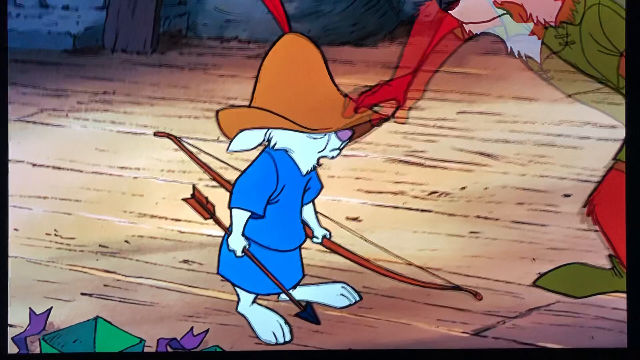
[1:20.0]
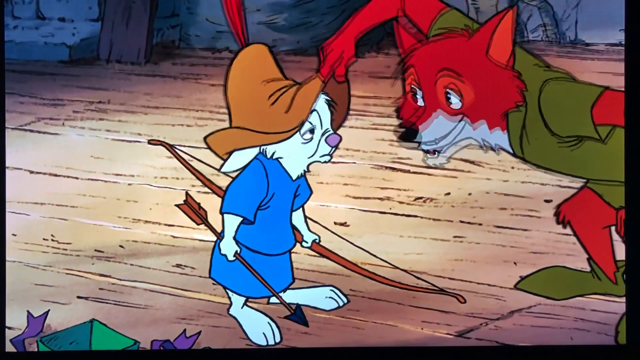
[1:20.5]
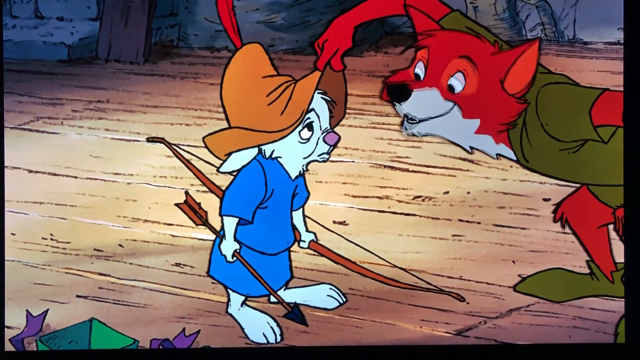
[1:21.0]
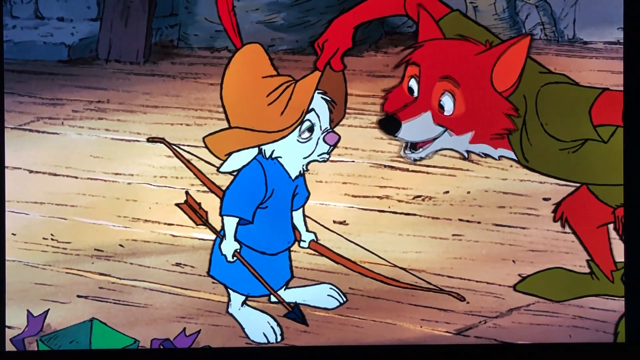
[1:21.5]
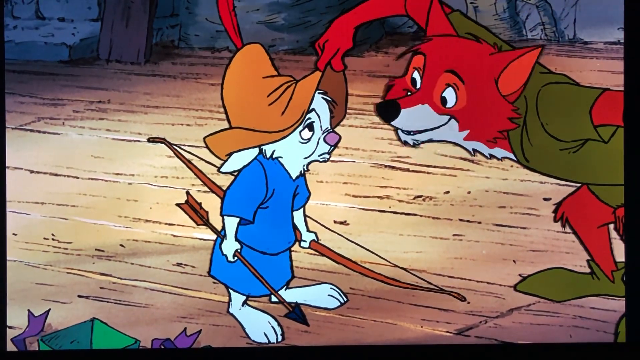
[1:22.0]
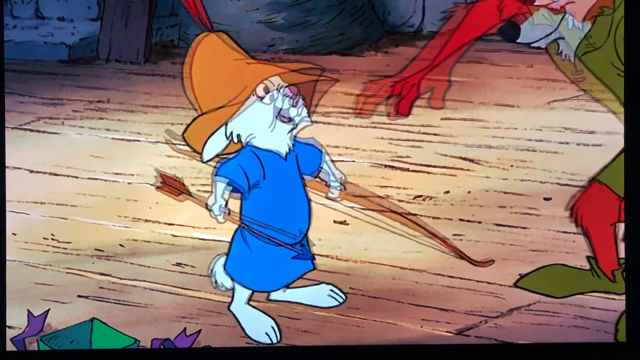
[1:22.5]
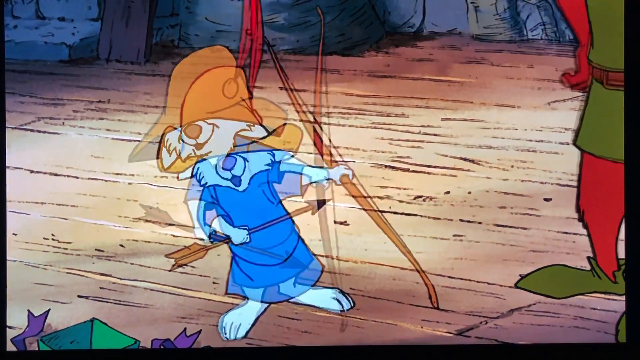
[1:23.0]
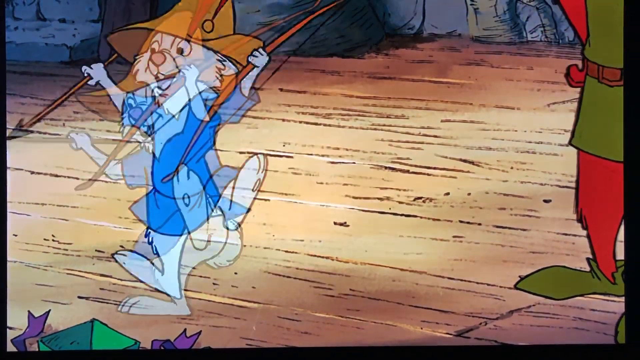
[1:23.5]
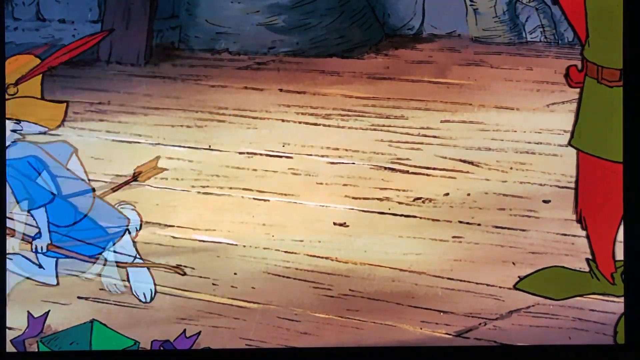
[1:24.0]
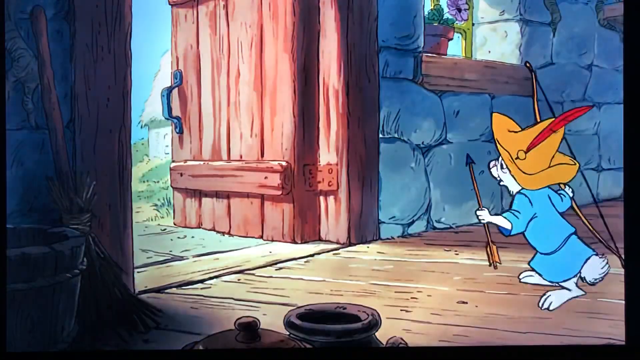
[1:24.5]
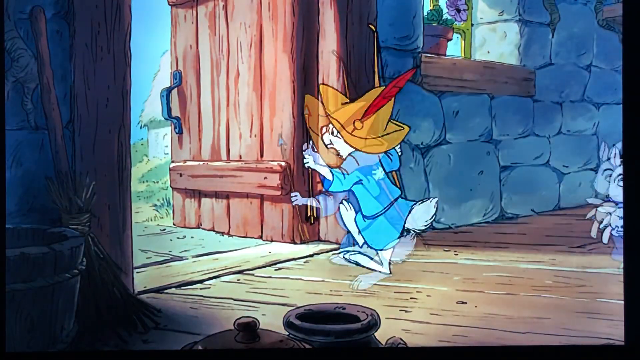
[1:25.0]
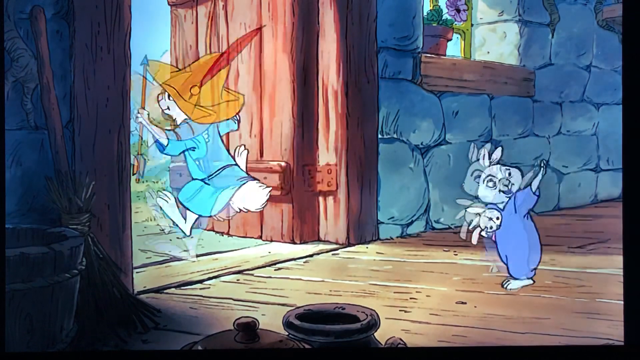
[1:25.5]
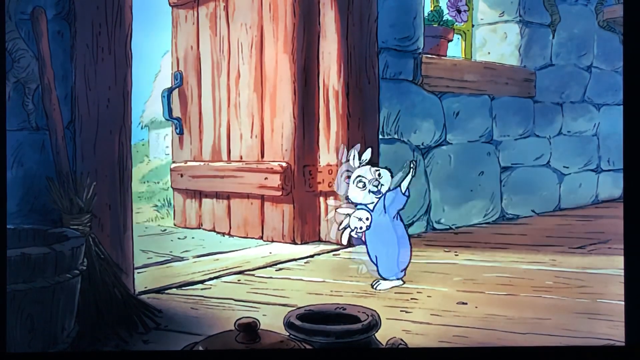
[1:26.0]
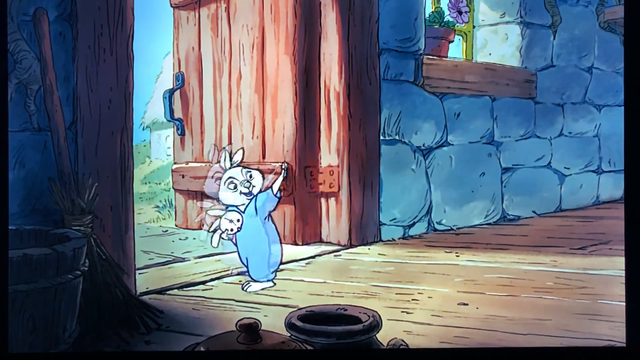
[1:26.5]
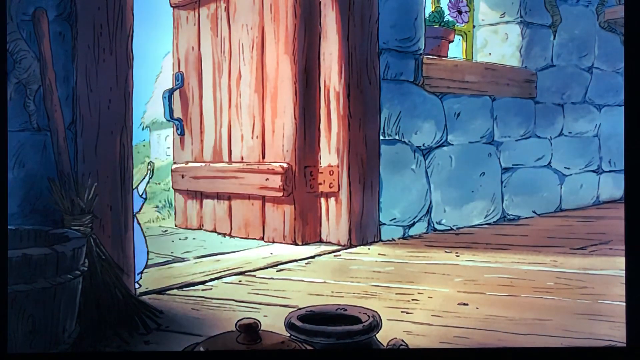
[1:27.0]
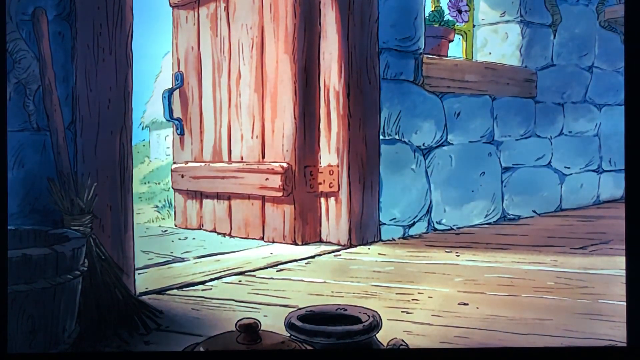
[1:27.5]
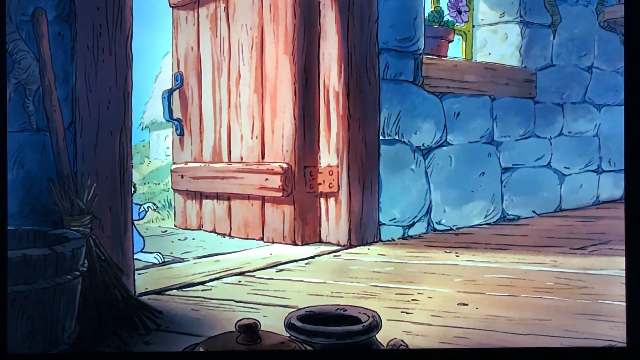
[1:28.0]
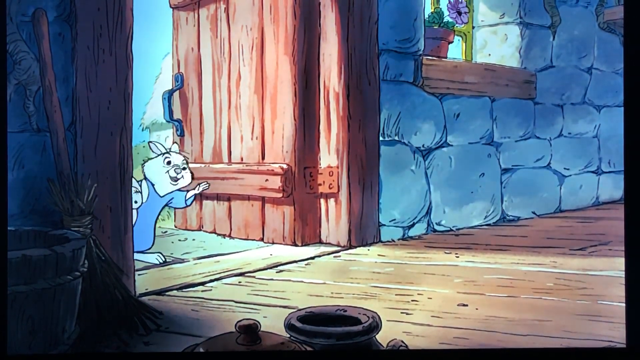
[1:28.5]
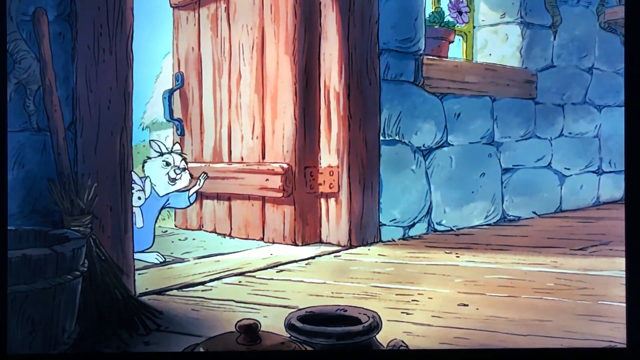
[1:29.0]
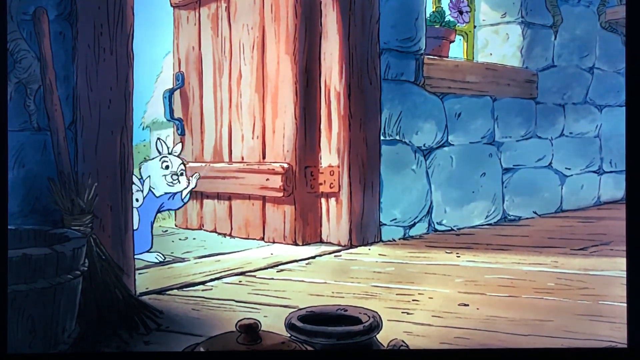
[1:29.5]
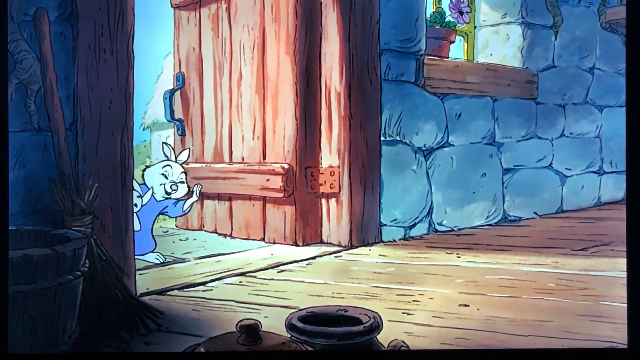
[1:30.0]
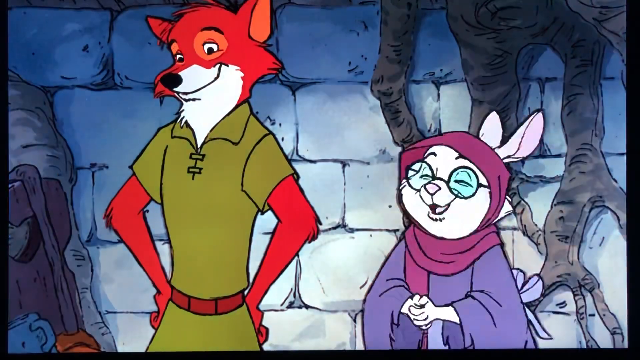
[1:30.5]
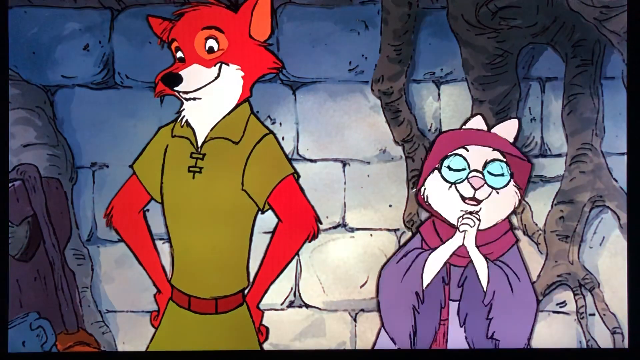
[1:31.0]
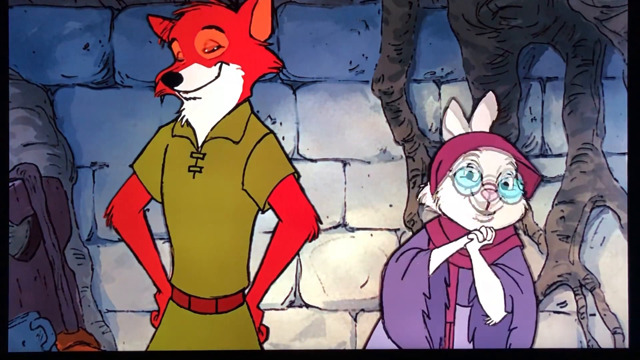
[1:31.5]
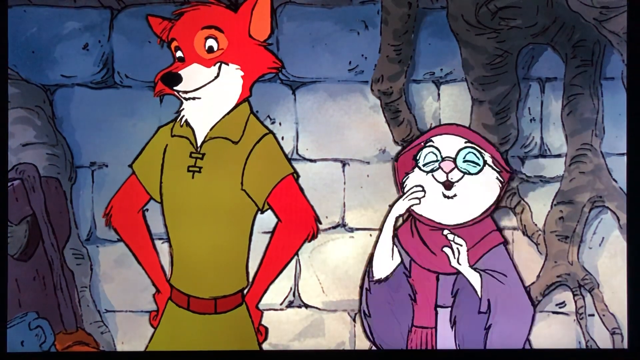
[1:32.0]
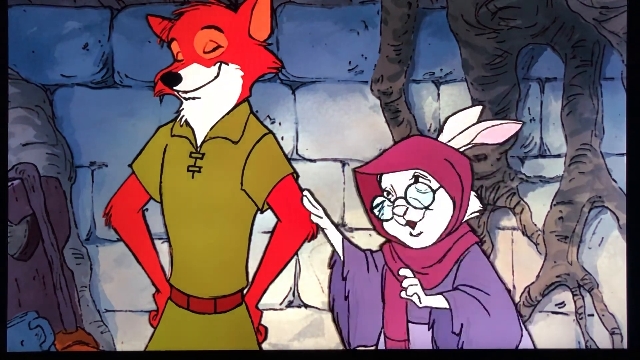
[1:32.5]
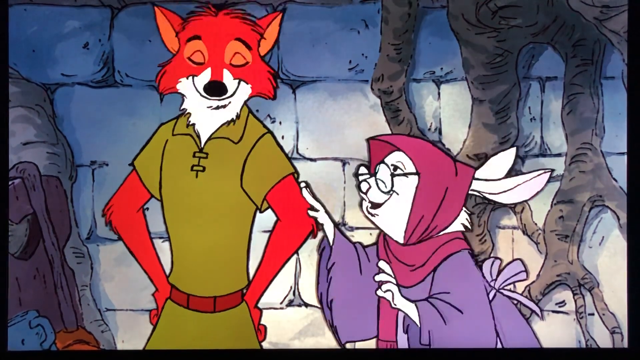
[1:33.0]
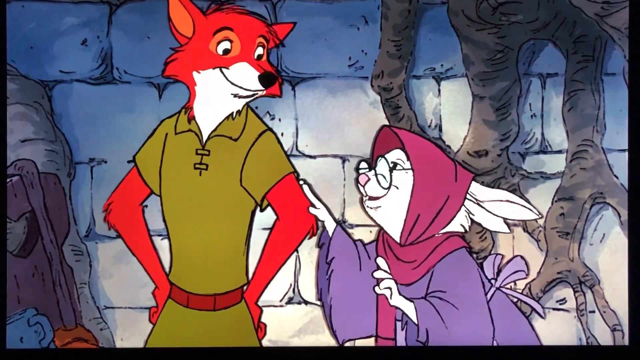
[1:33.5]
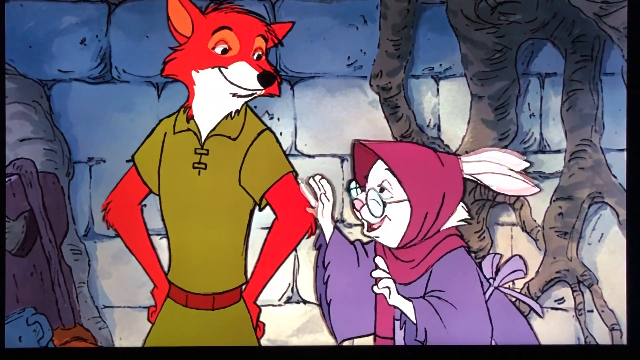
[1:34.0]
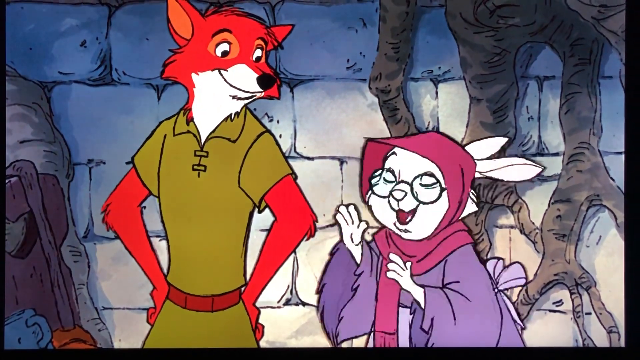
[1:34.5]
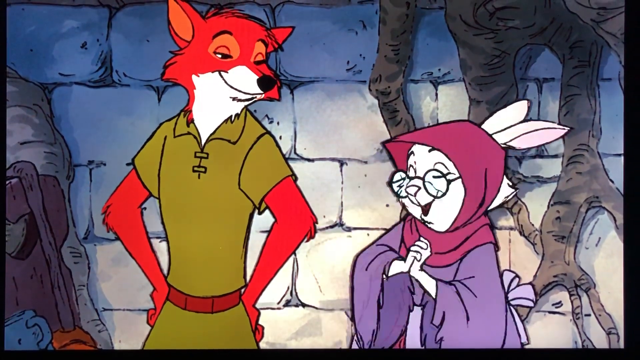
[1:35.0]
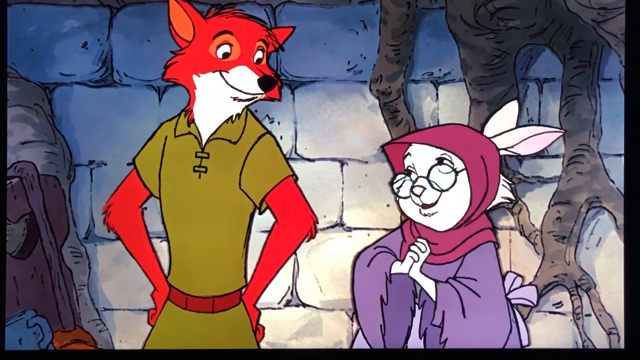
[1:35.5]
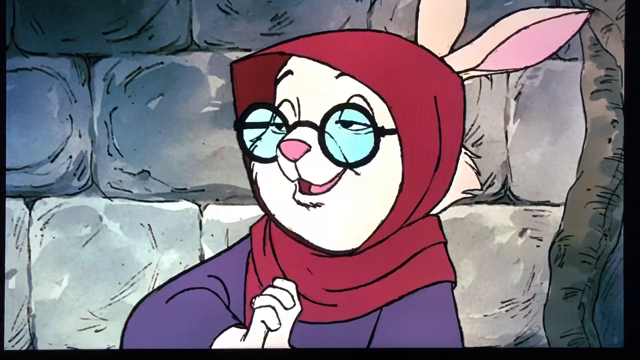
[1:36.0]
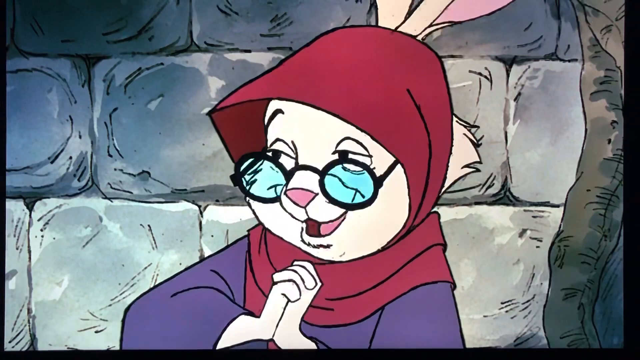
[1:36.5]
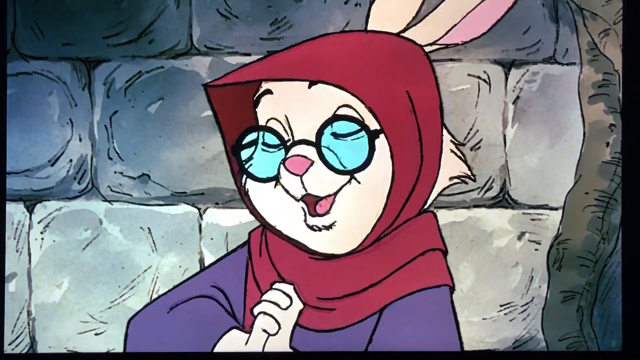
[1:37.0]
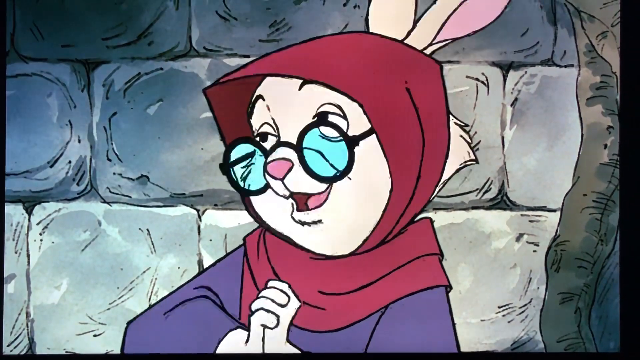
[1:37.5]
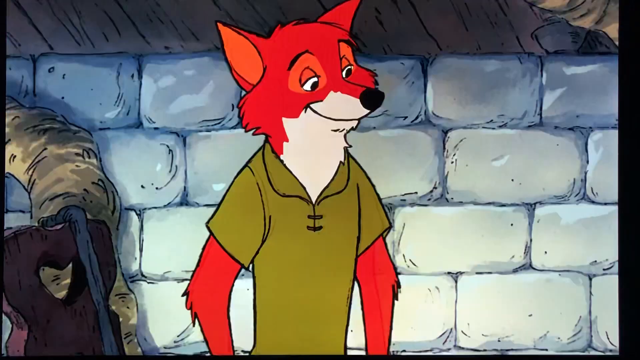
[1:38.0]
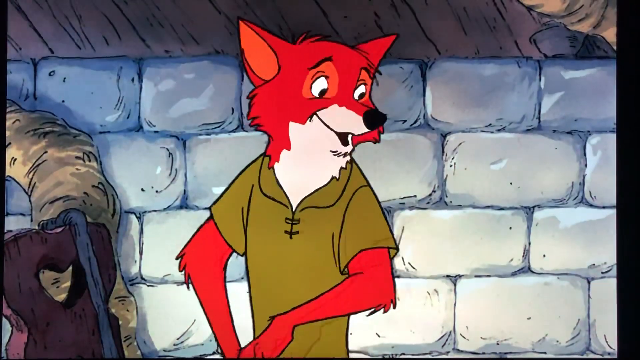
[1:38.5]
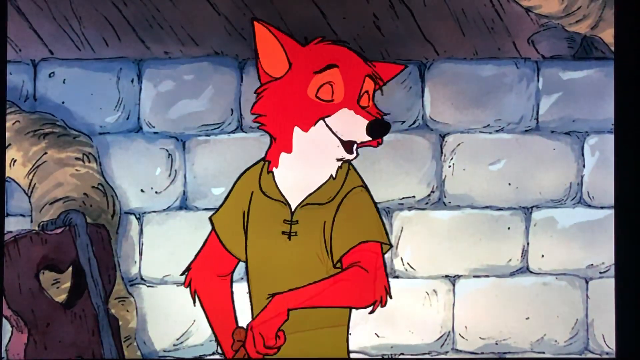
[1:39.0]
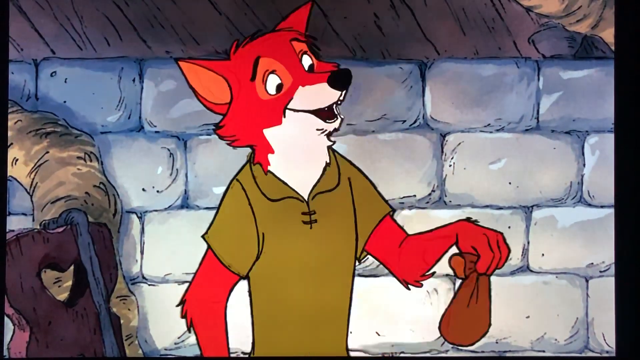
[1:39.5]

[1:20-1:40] The brother rabbit, with the hat and the bow and arrow, looks defeated after his sisters made fun of him. The Robin Hood fox reassures him, lifting up his hat and telling him something. Afterward the brother seems very happy, bounces with joy, and goes outside with his bow and arrow and hat, probably to play at being Robin Hood. His sister, the one who joked about him, follows him outside happily with her stuffed animal, no longer seeming to make fun of him, and waves goodbye to Robin Hood and her mother. The mother looks pleased and pats Robin Hood on the arm. The fox then hands her a pouch, which might be some kind of reward or money.